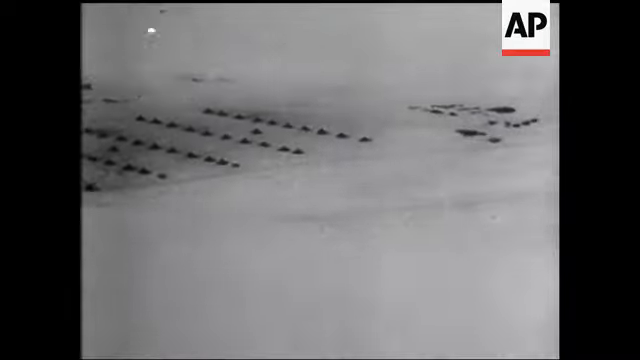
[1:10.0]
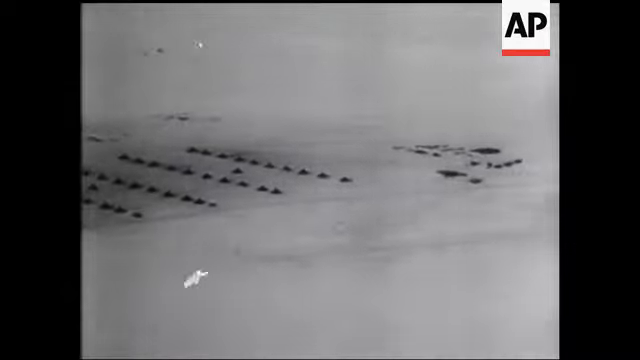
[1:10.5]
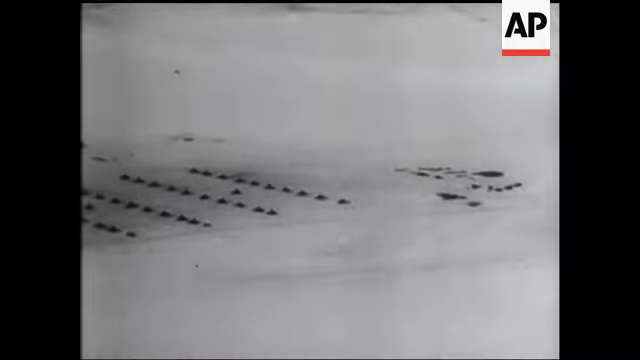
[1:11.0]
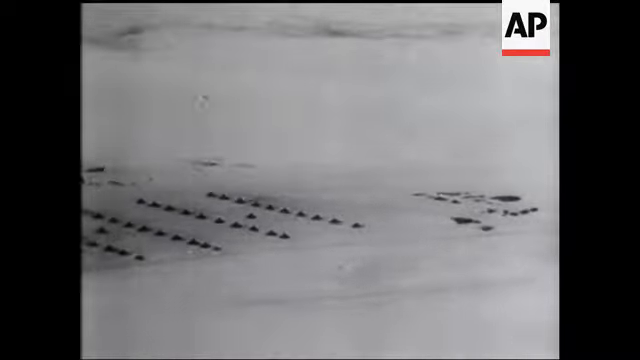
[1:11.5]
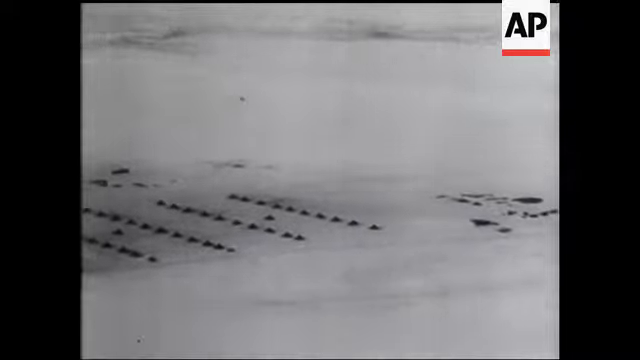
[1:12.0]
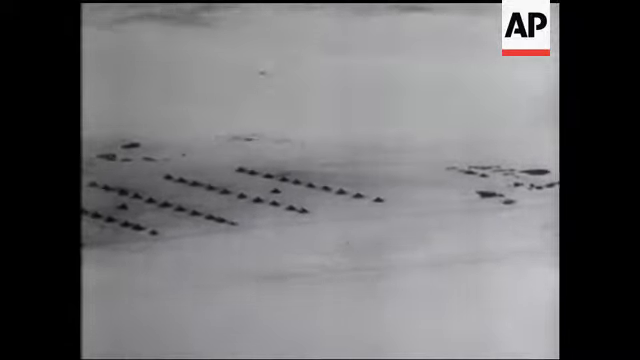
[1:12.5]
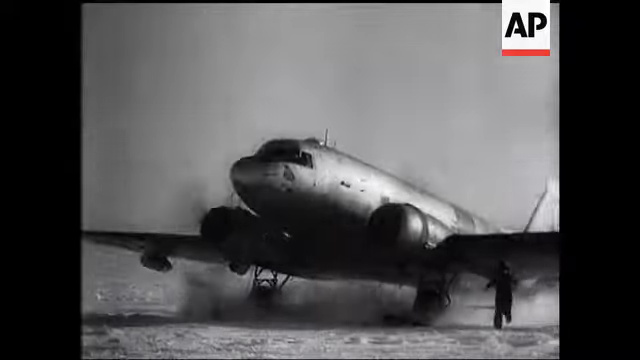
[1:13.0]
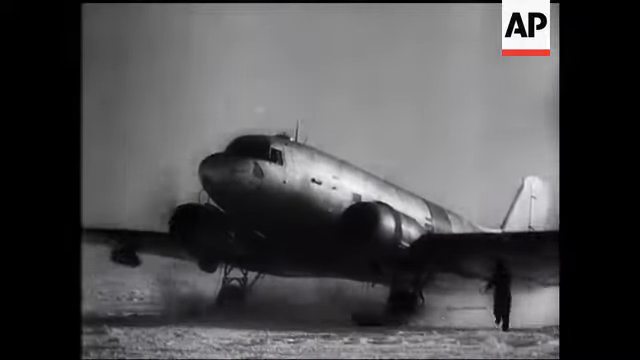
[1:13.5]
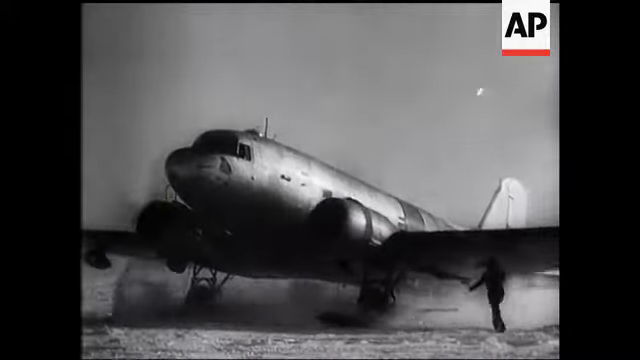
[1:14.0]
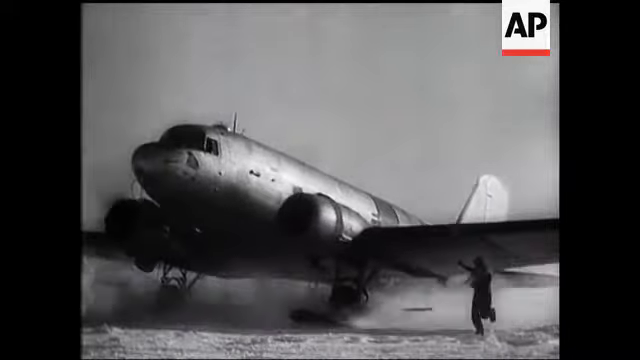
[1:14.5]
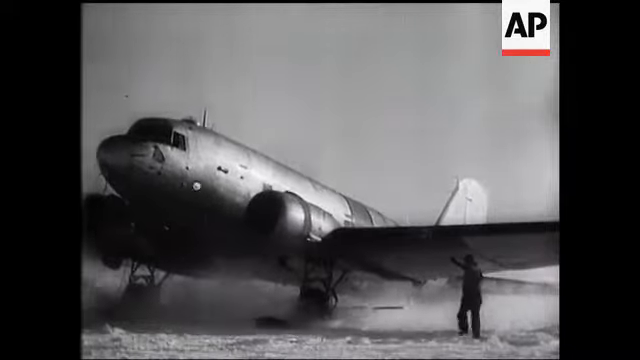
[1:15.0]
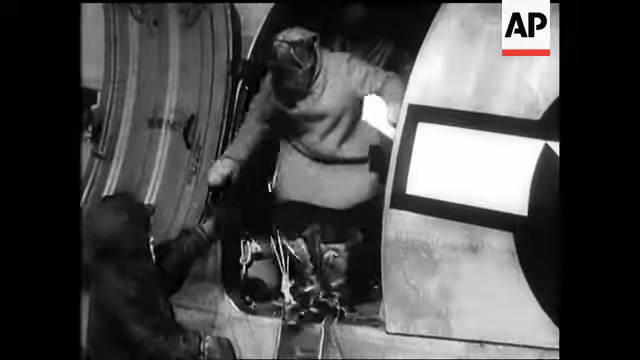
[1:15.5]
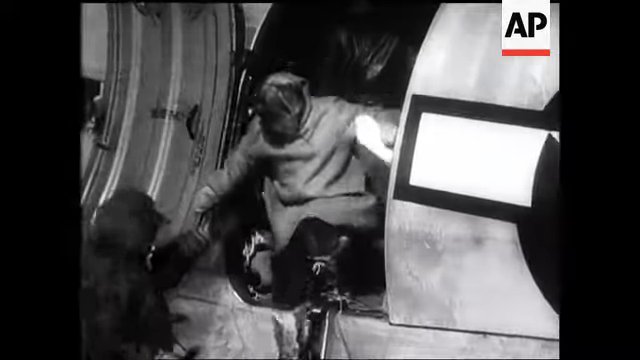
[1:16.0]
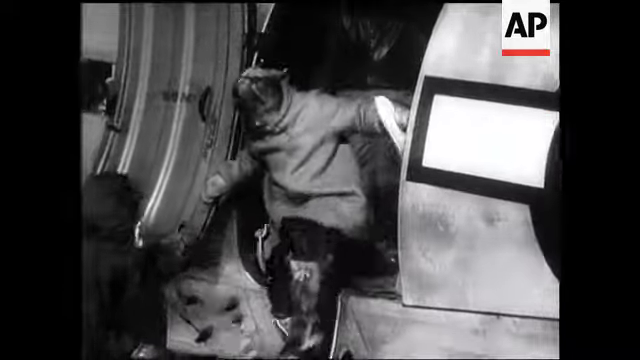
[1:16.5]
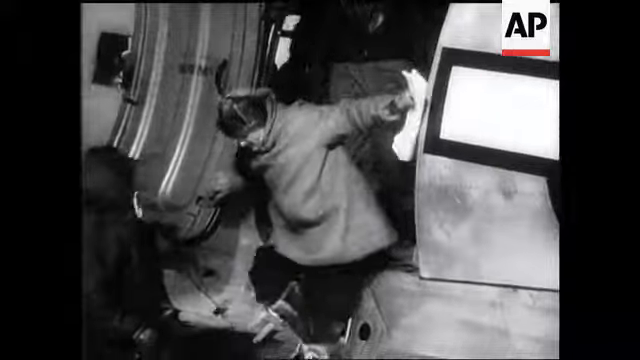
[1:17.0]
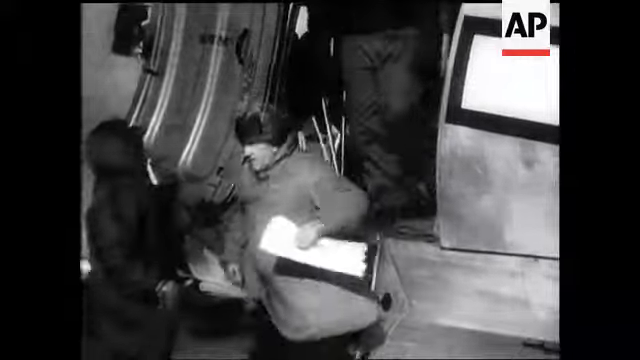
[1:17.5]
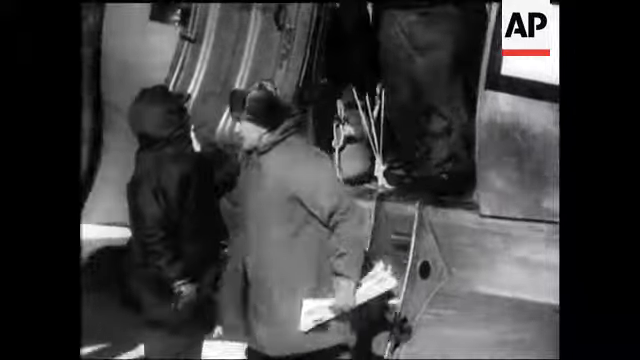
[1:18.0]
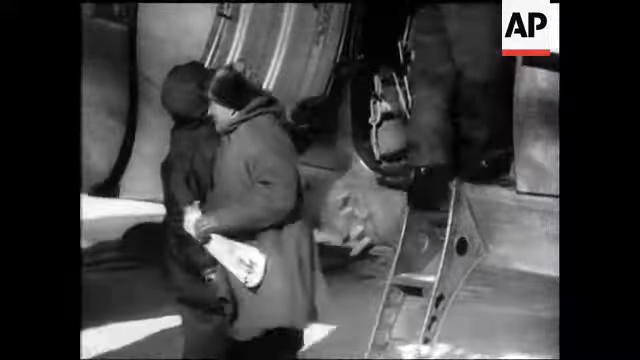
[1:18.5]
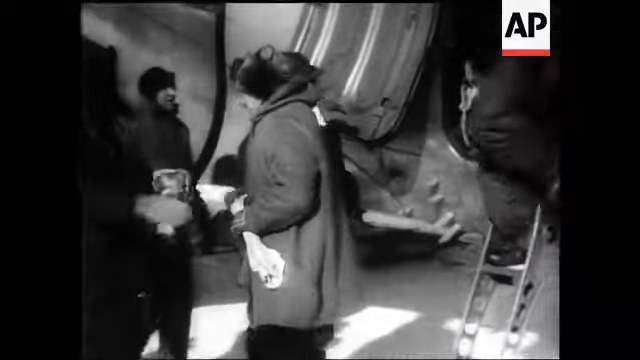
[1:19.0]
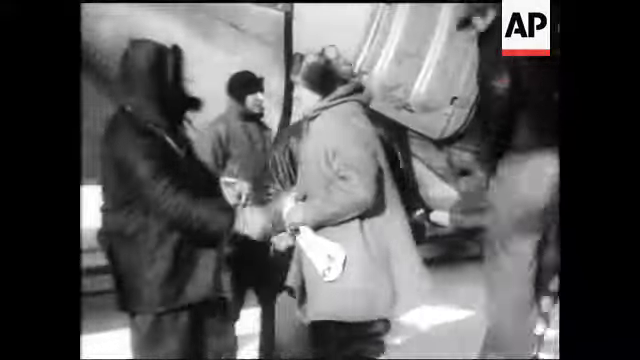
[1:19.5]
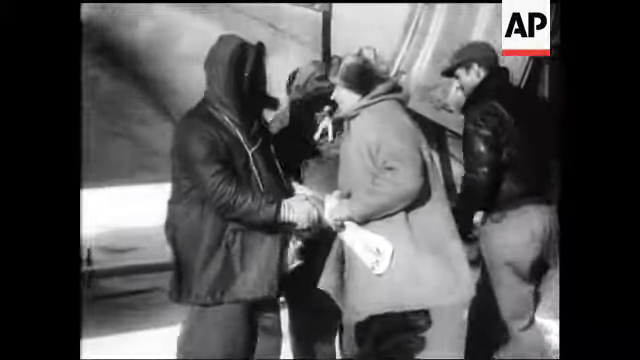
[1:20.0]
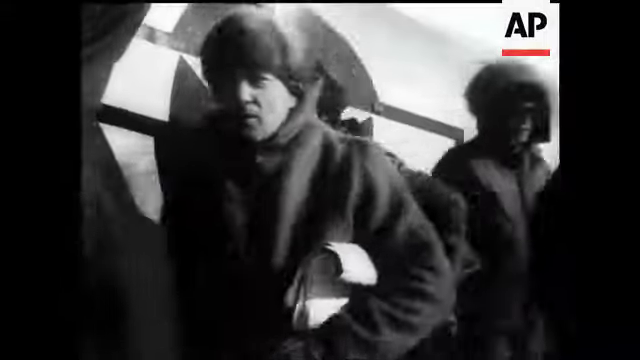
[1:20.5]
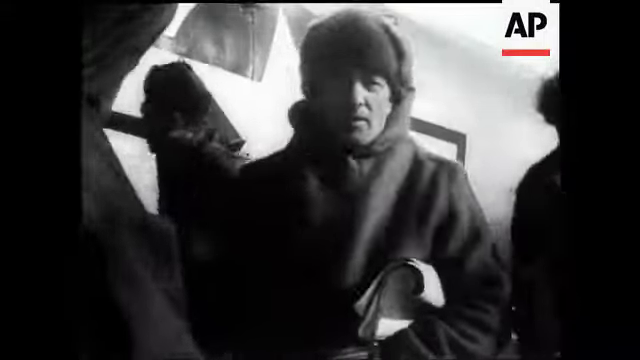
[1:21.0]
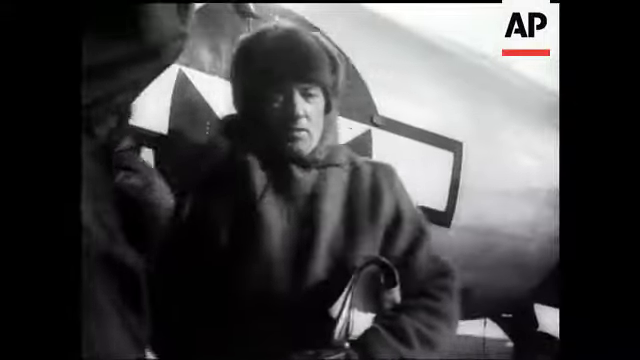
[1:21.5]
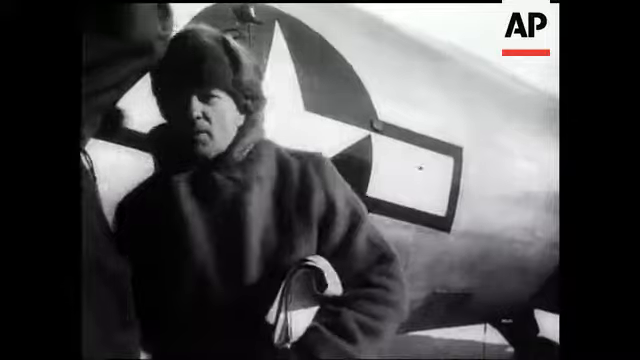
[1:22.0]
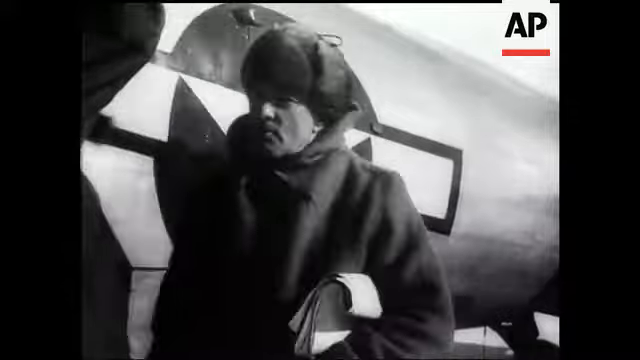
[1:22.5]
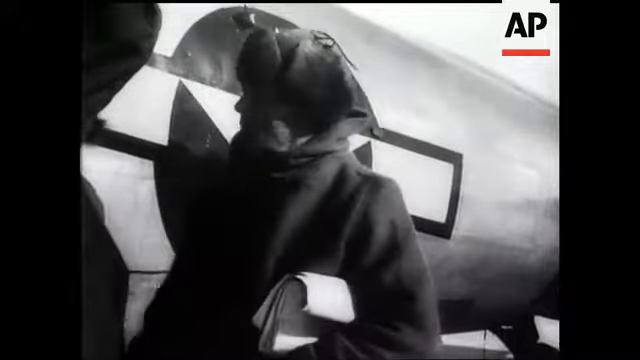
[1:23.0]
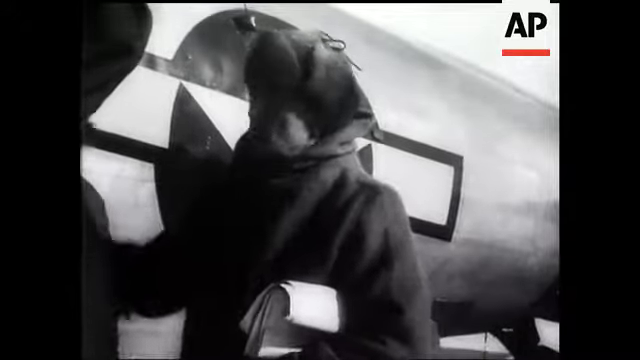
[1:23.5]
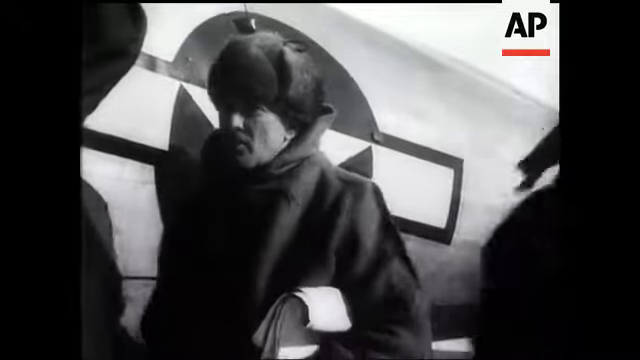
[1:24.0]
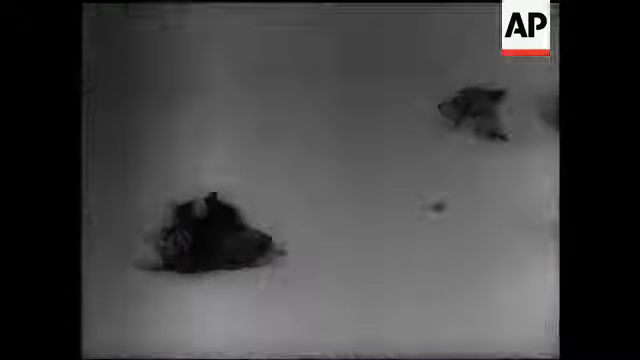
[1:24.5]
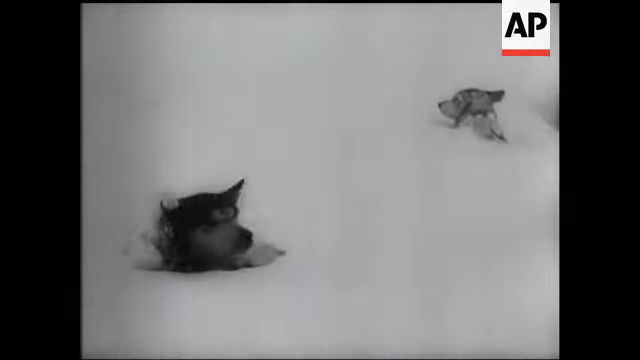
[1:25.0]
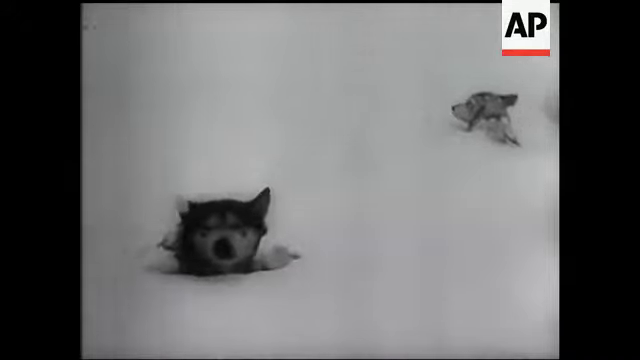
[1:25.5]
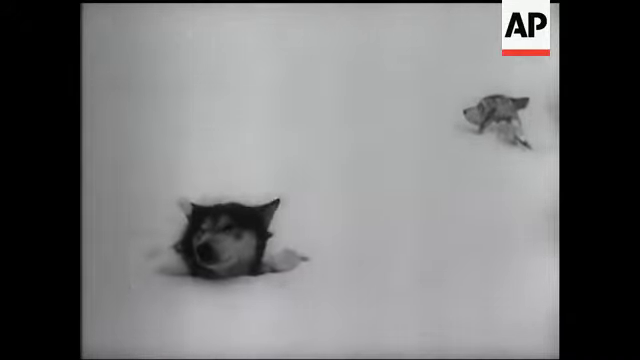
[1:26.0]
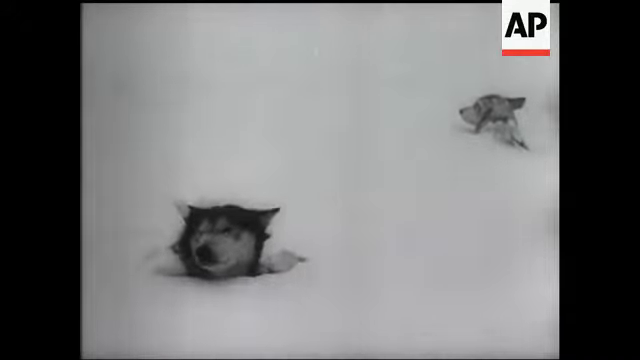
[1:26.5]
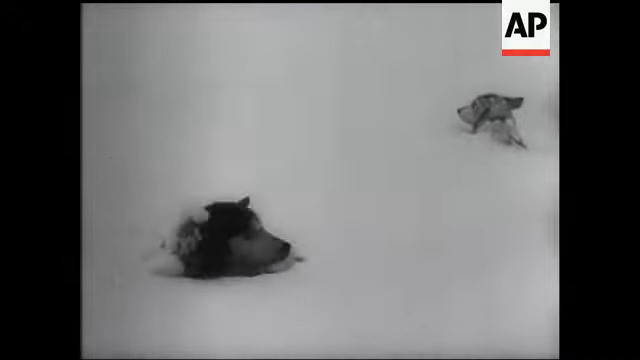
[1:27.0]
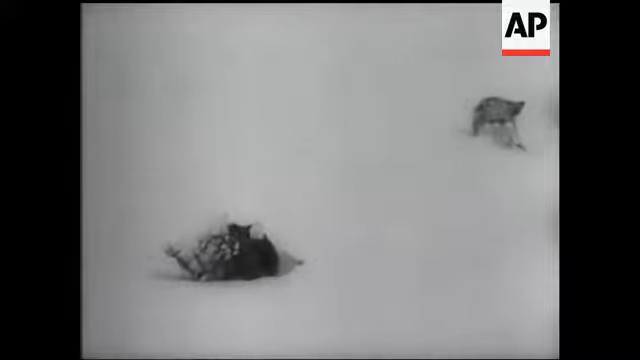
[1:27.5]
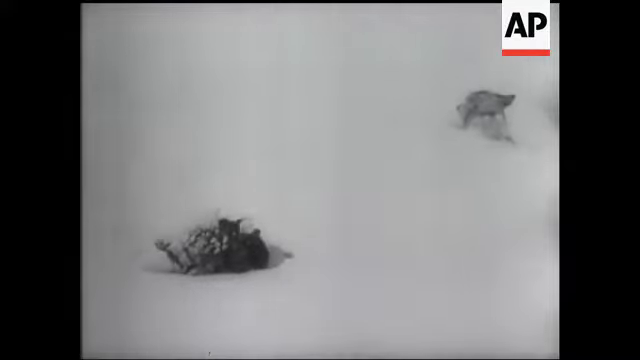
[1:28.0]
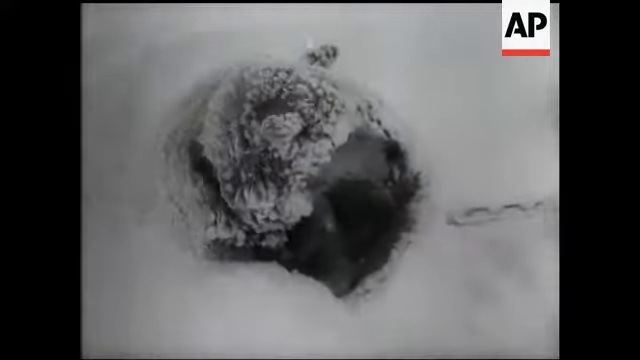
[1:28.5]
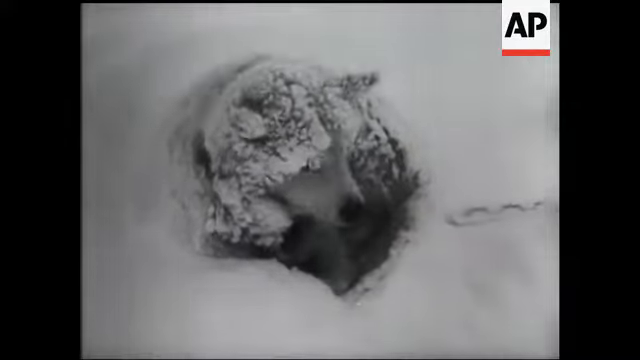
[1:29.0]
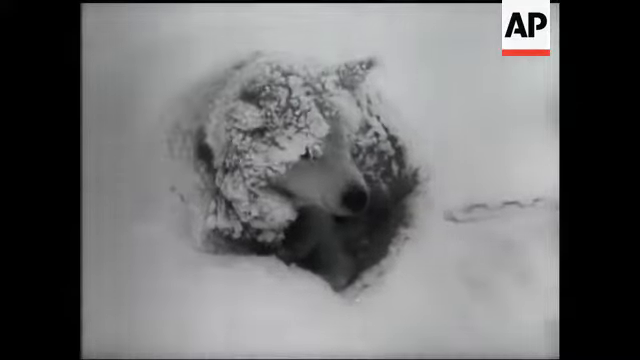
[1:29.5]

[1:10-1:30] A view shows what appears to be an Antarctic station, with lots of huts assembled in strict lines on a snowy surface. The twin-engine plane from before, a Dakota Douglas, comes in to land on the icy, snowy surface on a very cold day. Very heavily dressed people, all wearing fur hats, gloves and big coats, get out of the plane and shake hands with the people on the ground as they are introduced. Two husky dogs are buried up to their necks in the snow, seemingly to keep warm.